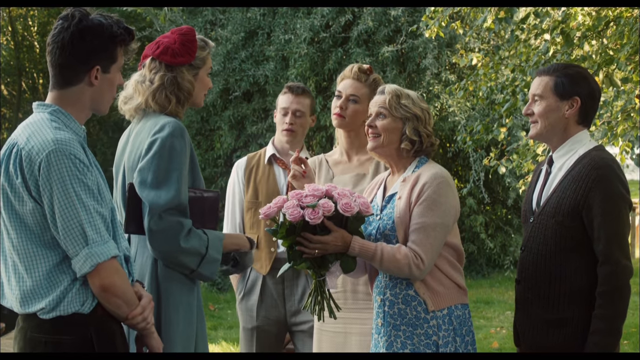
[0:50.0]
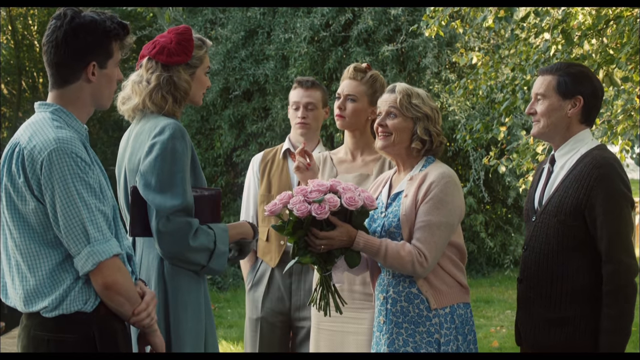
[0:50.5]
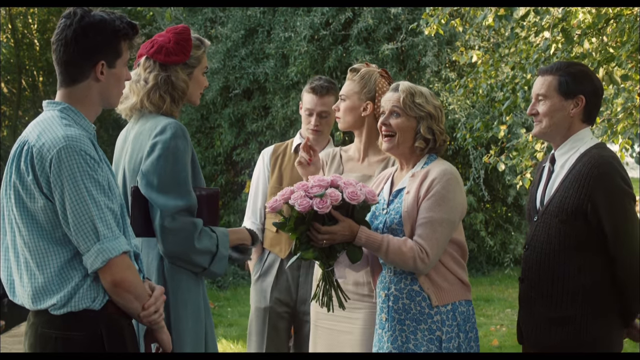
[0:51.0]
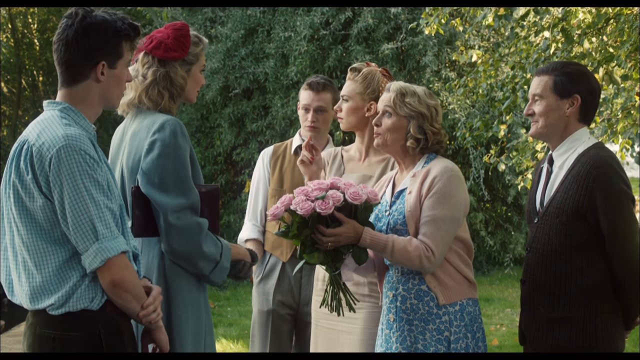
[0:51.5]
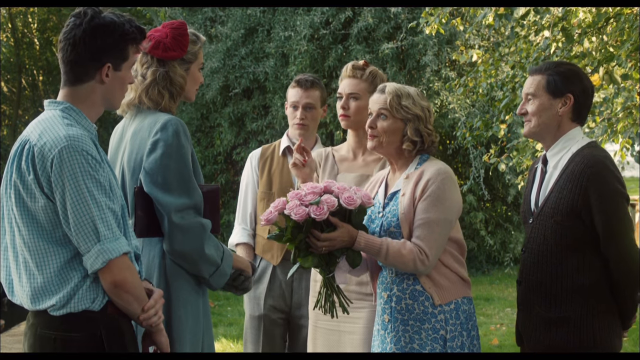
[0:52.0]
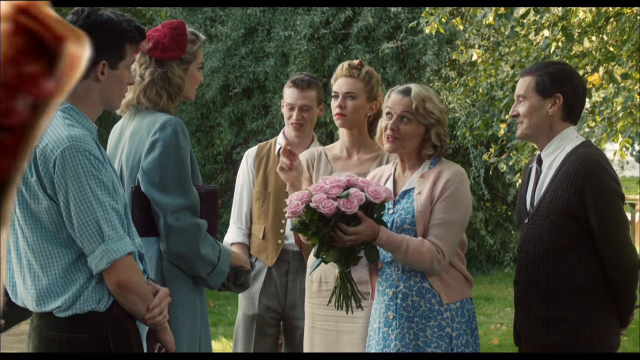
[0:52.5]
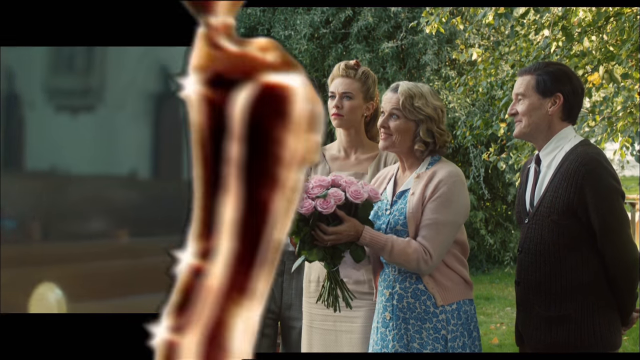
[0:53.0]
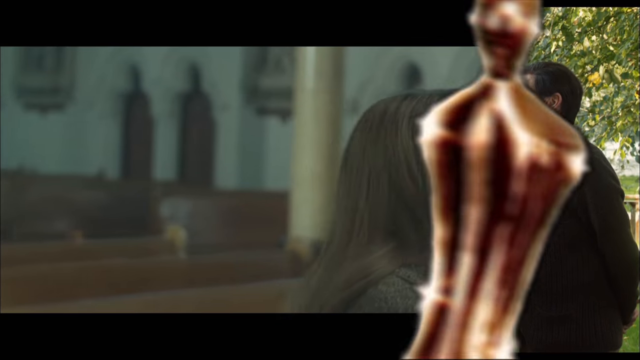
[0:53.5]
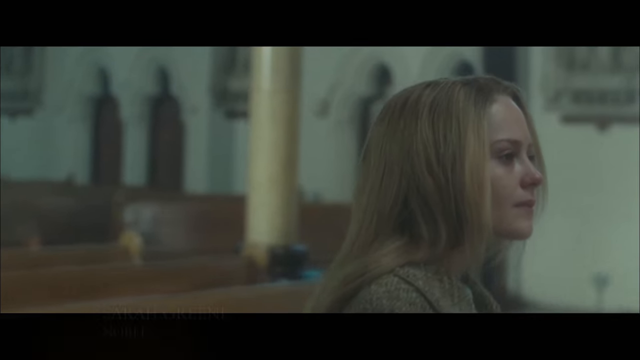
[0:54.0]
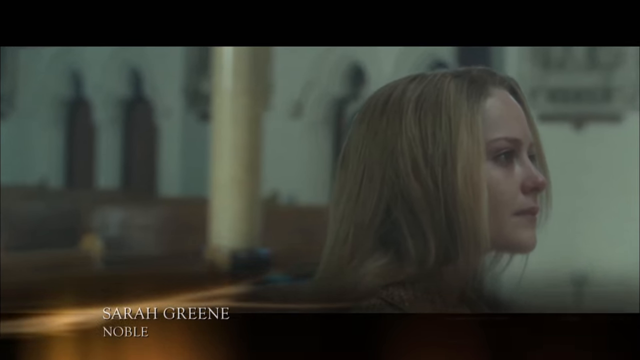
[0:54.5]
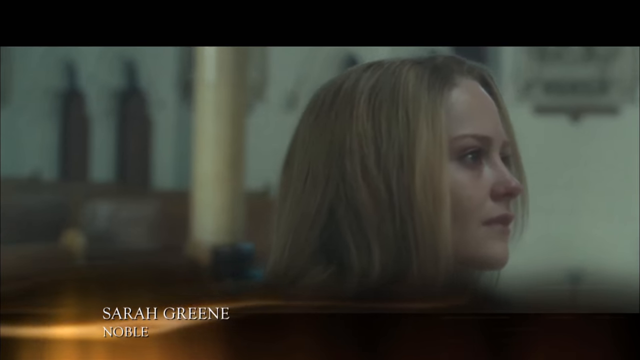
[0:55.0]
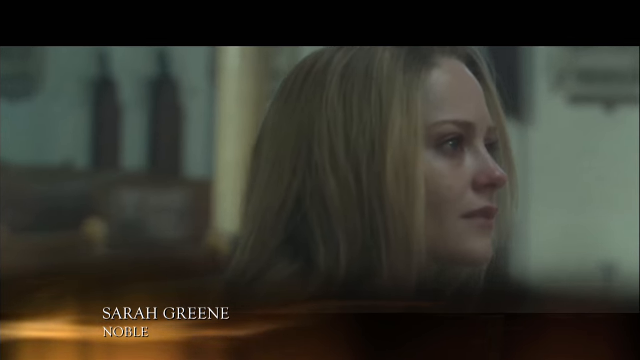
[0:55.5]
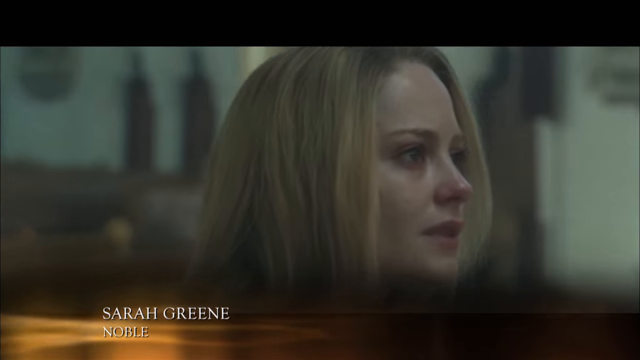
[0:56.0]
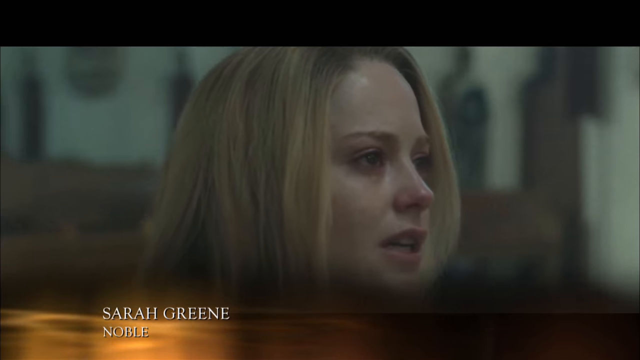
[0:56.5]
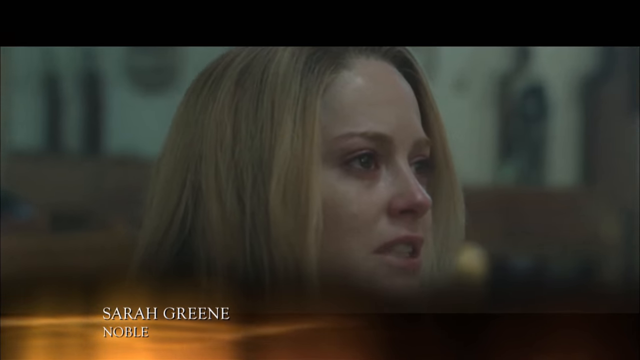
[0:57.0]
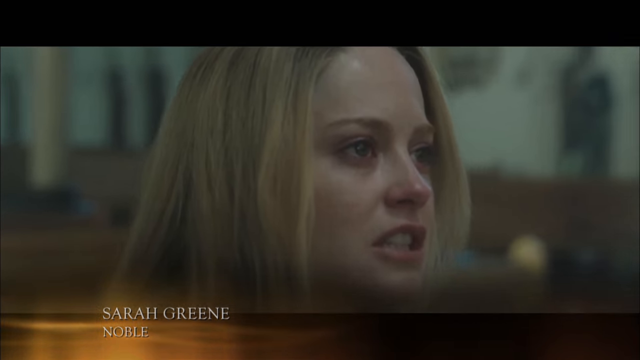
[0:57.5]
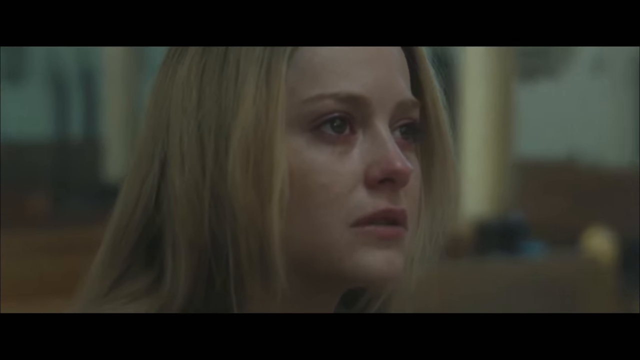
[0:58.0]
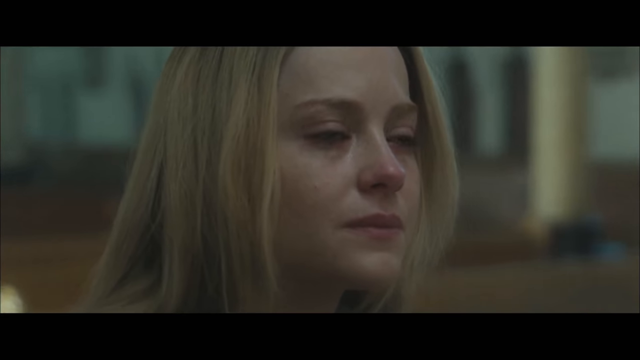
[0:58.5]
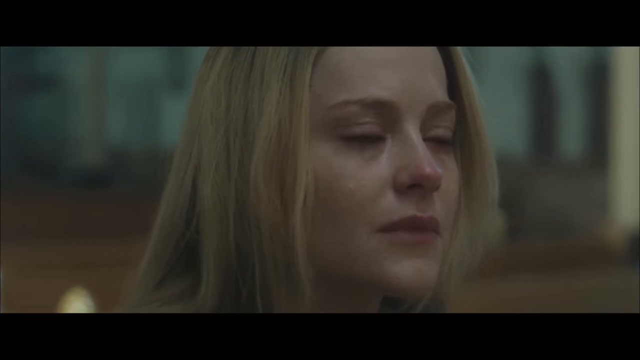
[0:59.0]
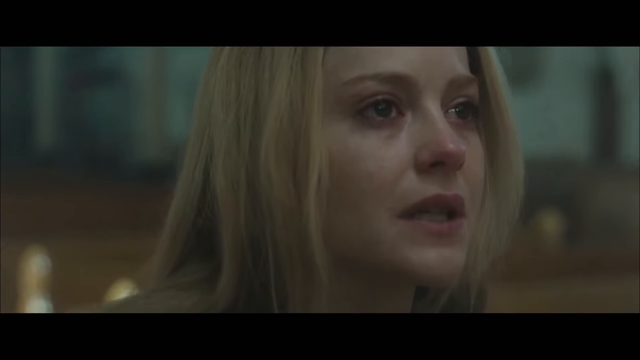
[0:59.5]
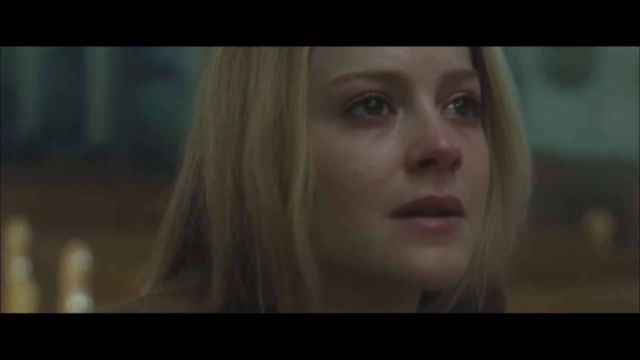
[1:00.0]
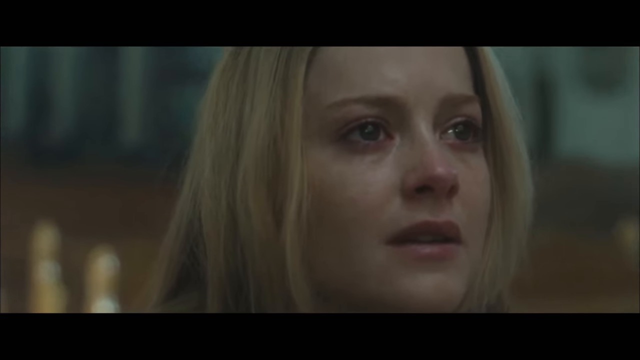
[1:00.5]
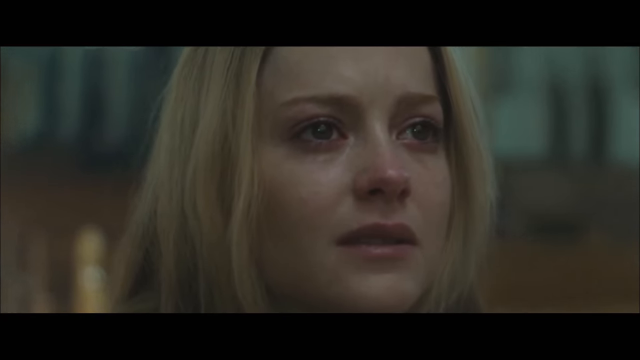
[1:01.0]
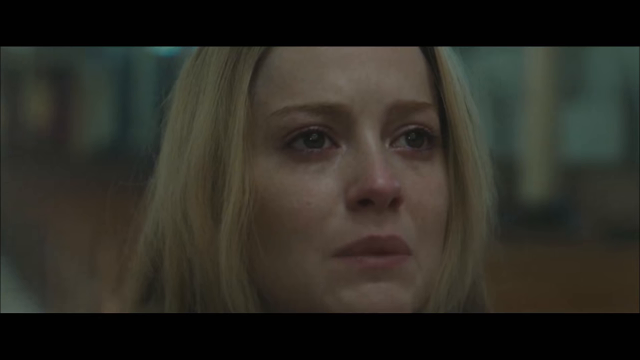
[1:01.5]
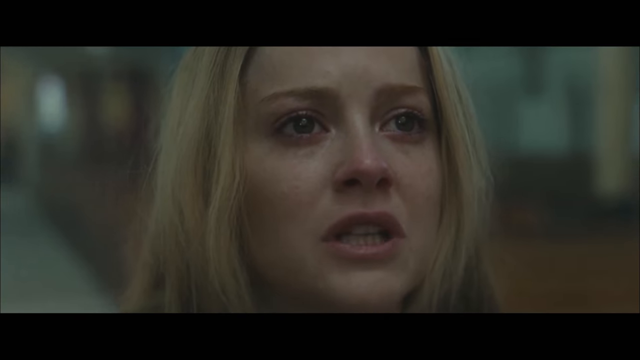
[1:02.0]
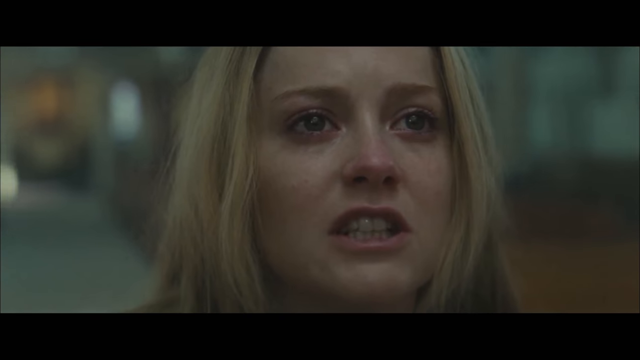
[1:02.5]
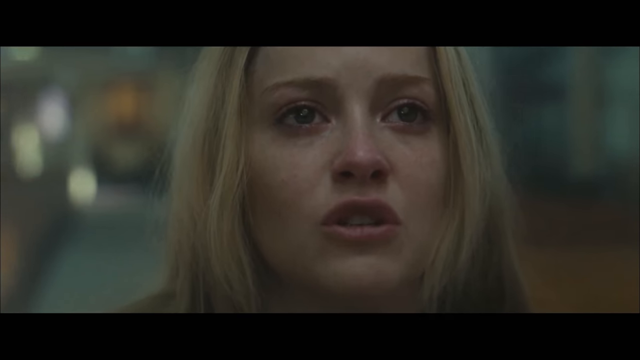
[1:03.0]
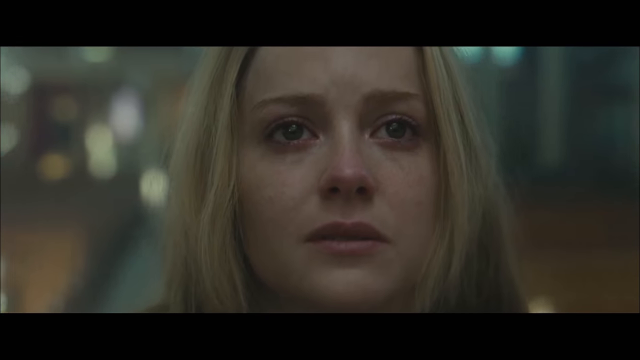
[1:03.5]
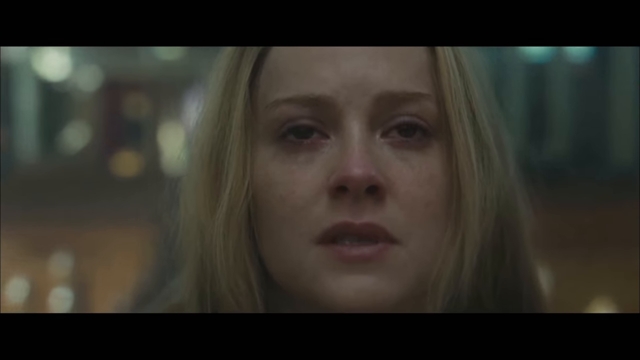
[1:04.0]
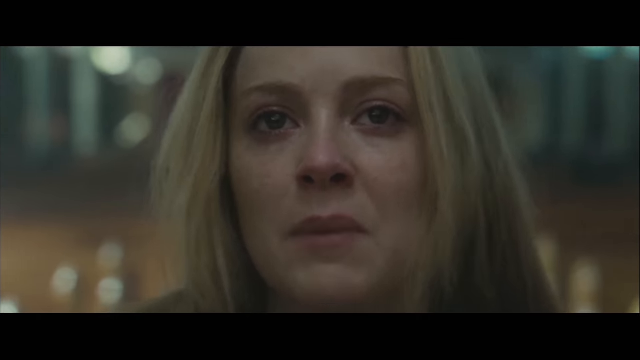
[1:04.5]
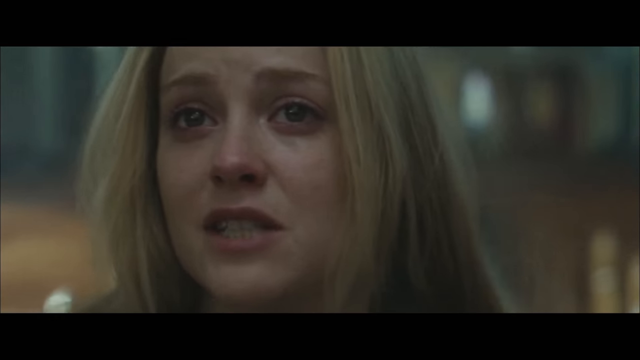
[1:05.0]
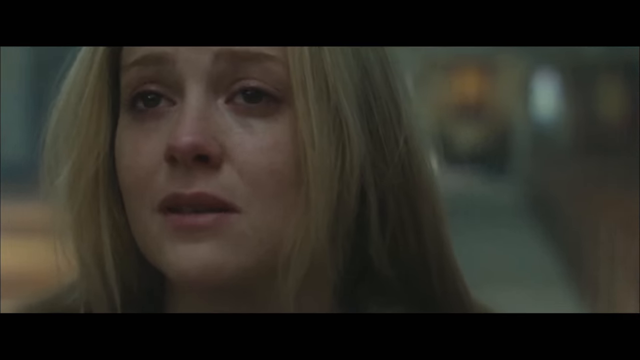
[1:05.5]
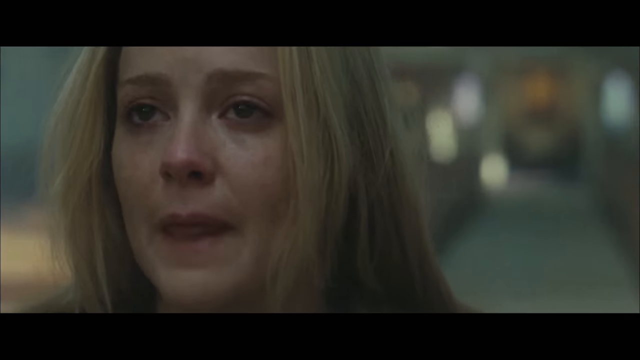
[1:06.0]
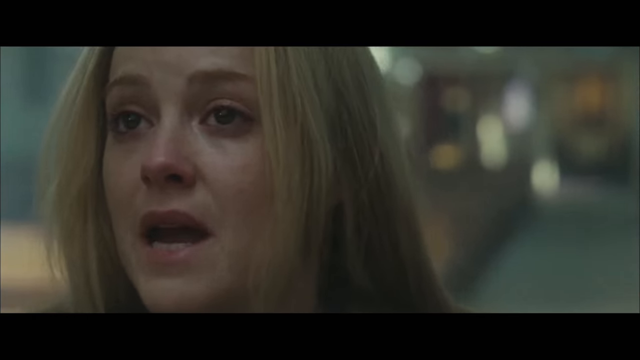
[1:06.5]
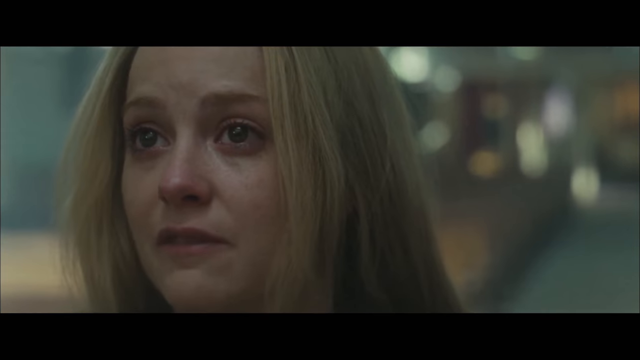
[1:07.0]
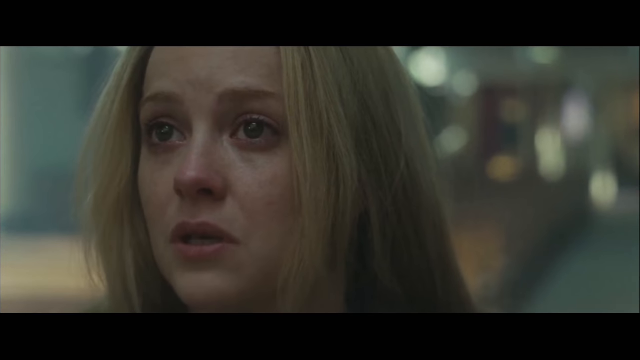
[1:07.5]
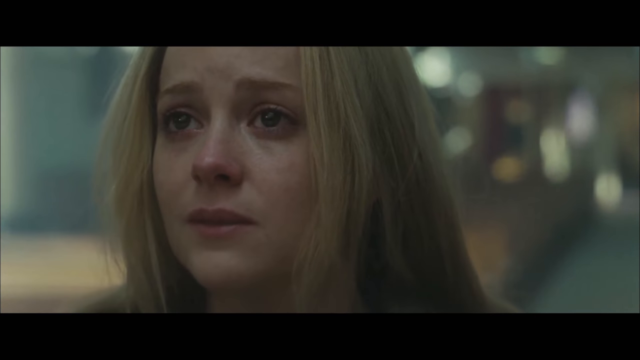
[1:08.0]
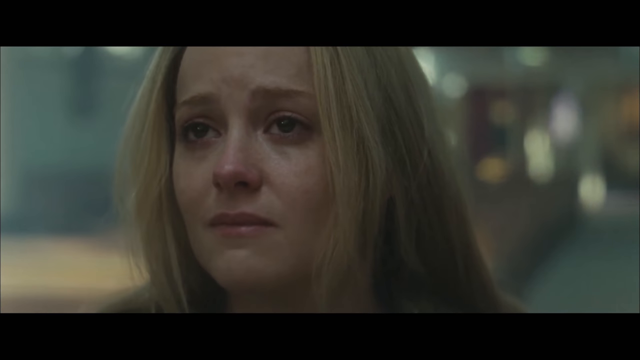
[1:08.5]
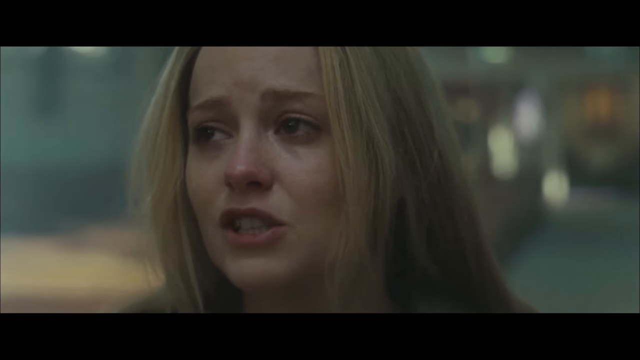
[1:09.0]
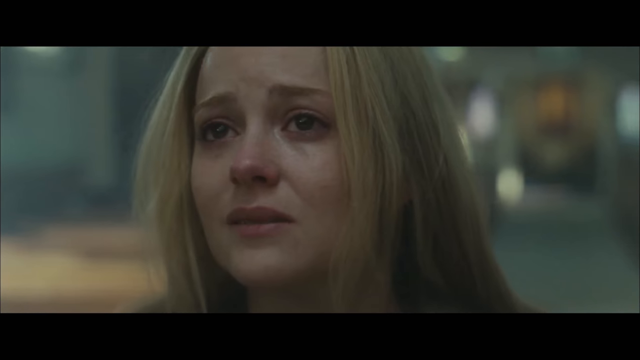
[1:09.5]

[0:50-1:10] A man and a woman walk up to a group of people: an older lady, an older man, a younger girl and a younger boy. The older man wears a brown blazer with a tie, and the older woman wears a blue flowery dress with a cream-colored jacket over it. The woman who walks up wears a blue dress and a red hat; she carries the bouquet of pink roses and hands them to the older lady, who seems very excited. The scene changes to one labeled "Sarah Green Noble," and the camera zooms in on a blonde woman who is speaking. From the background she appears to be in a church, and she is crying and apparently upset.